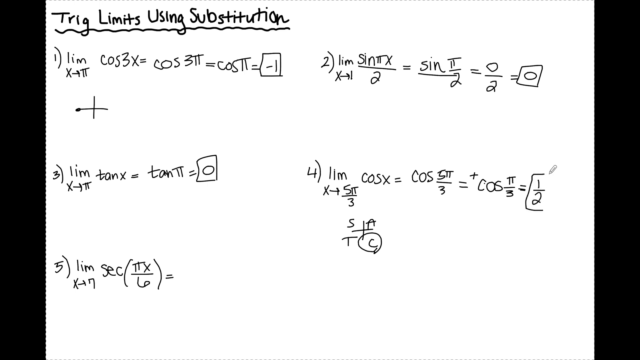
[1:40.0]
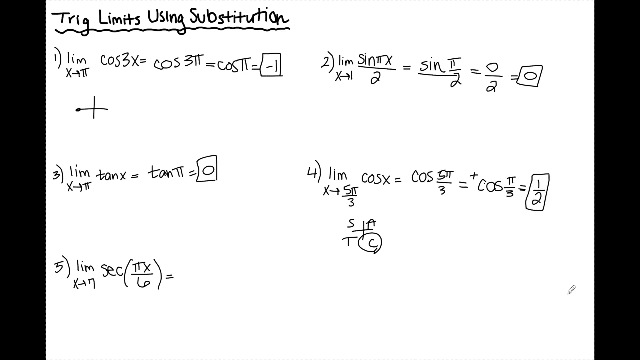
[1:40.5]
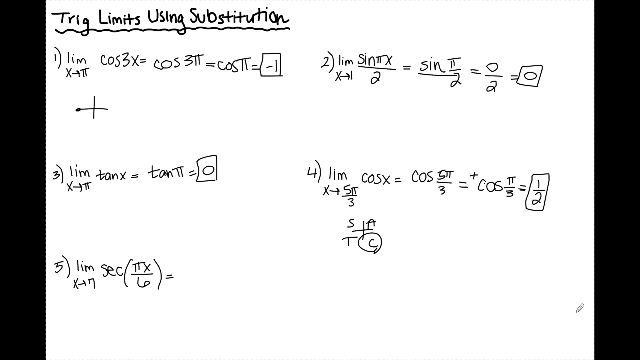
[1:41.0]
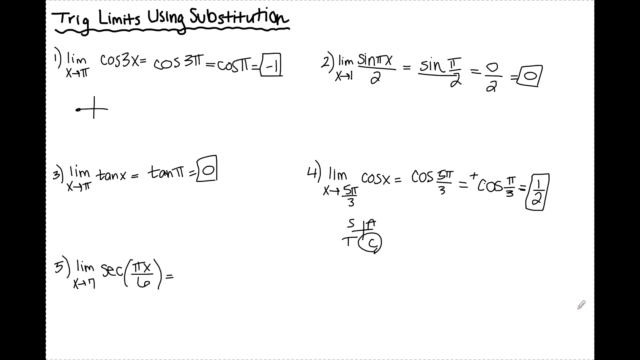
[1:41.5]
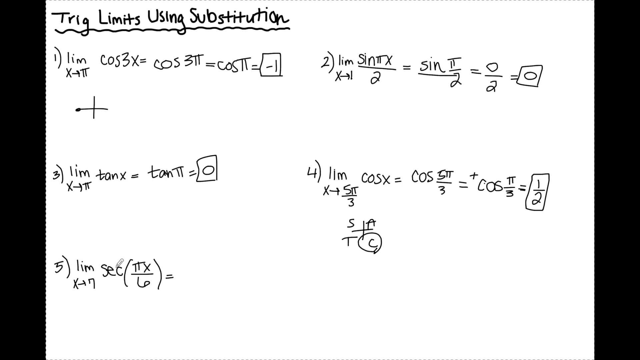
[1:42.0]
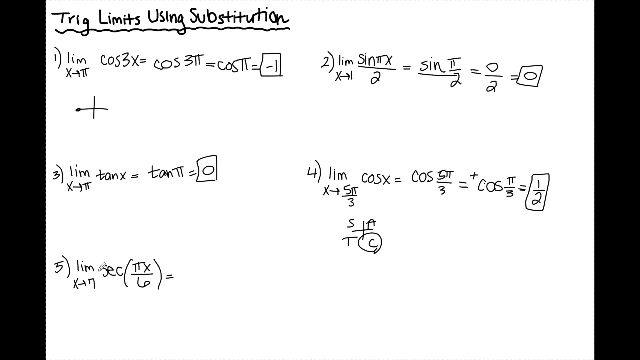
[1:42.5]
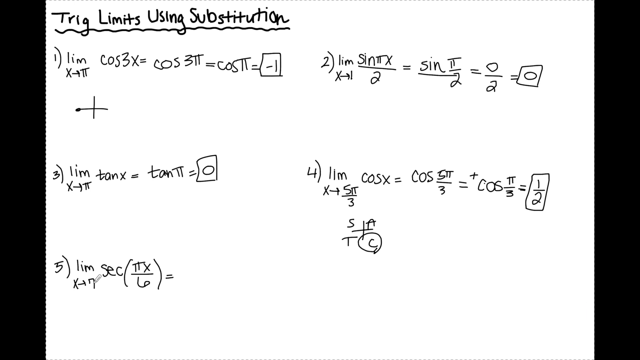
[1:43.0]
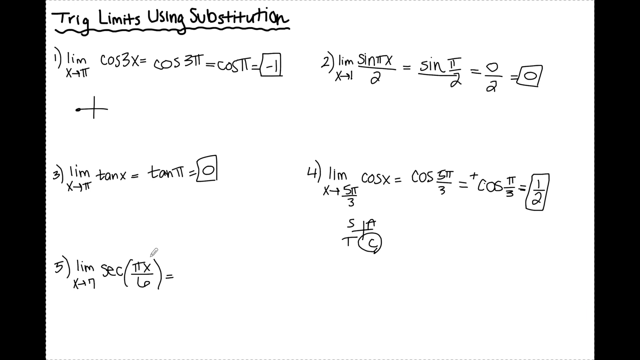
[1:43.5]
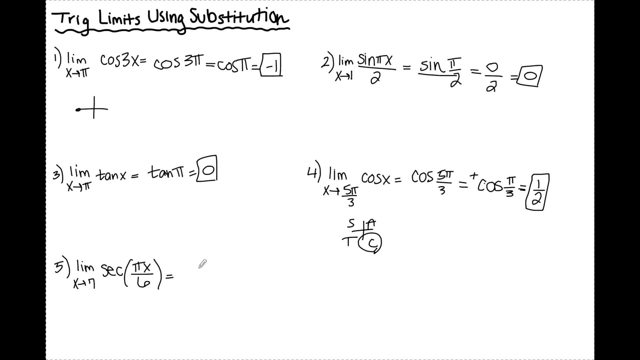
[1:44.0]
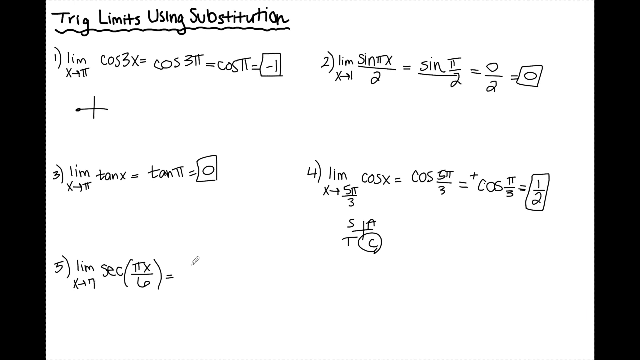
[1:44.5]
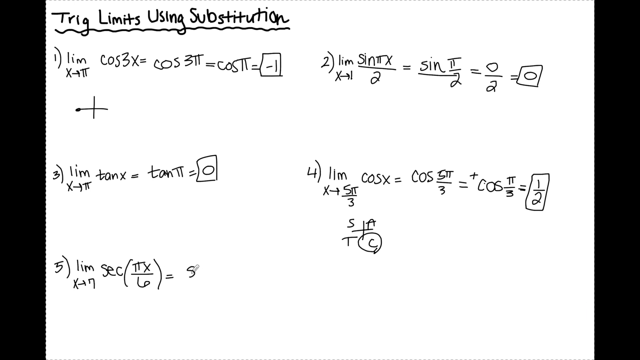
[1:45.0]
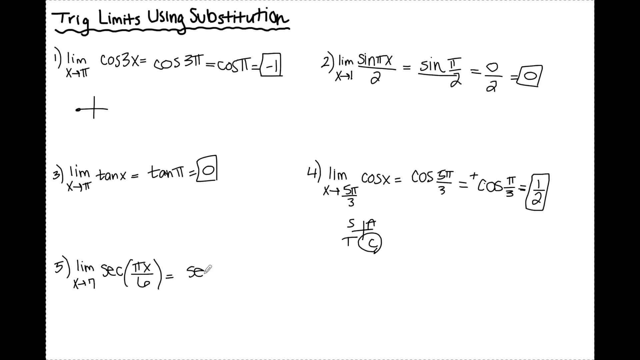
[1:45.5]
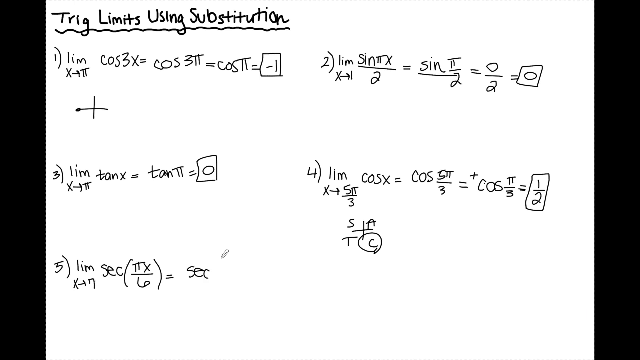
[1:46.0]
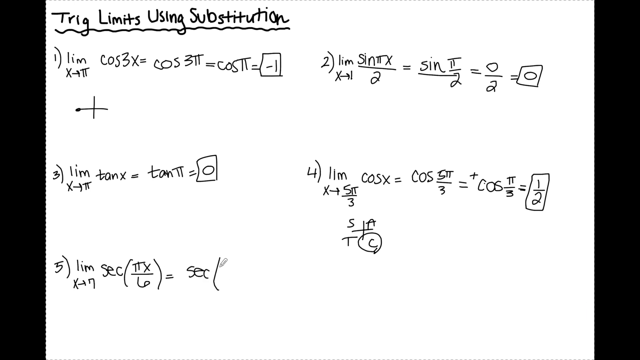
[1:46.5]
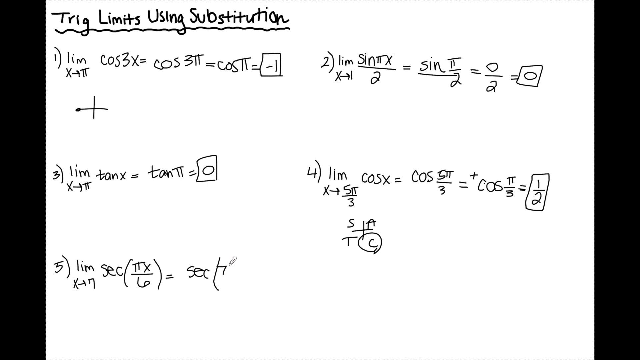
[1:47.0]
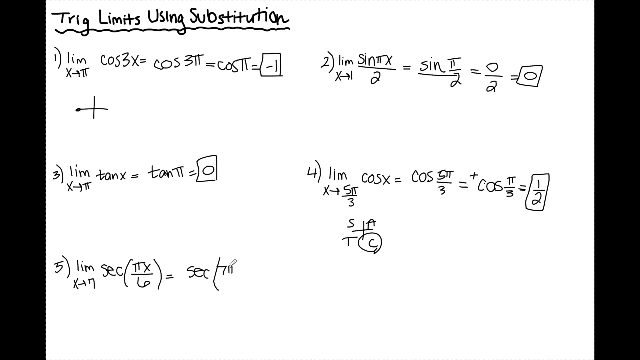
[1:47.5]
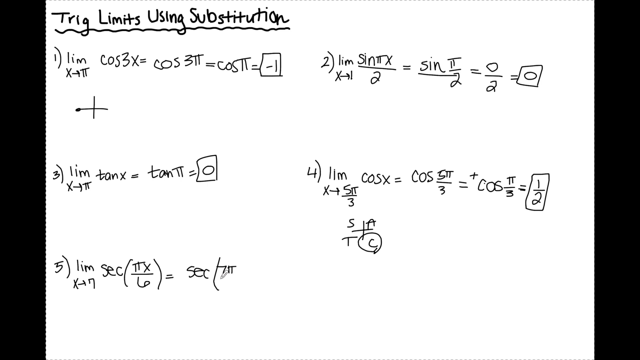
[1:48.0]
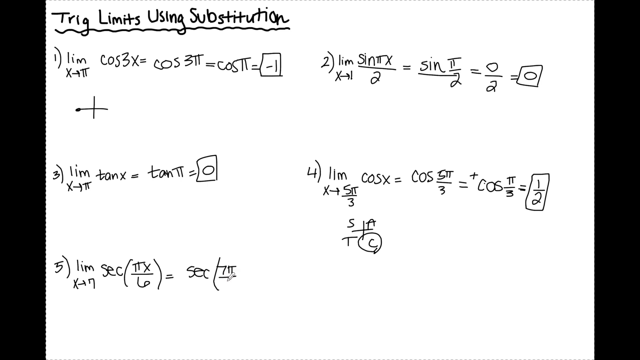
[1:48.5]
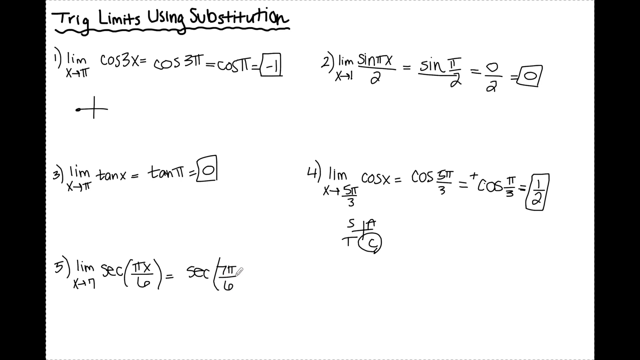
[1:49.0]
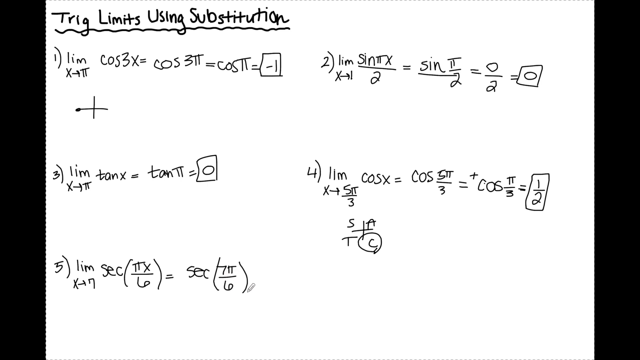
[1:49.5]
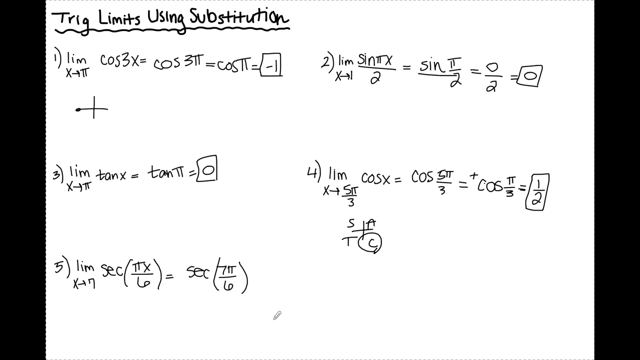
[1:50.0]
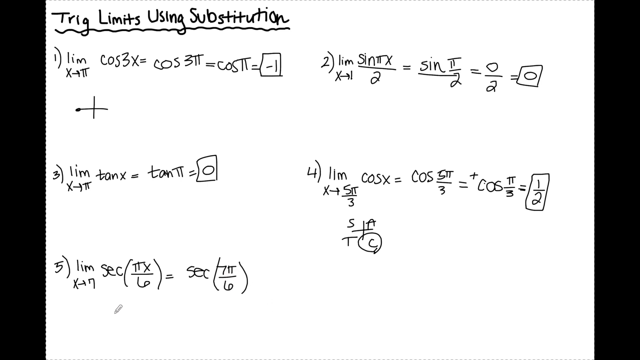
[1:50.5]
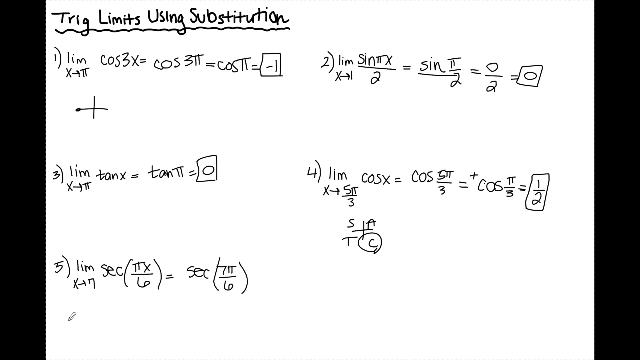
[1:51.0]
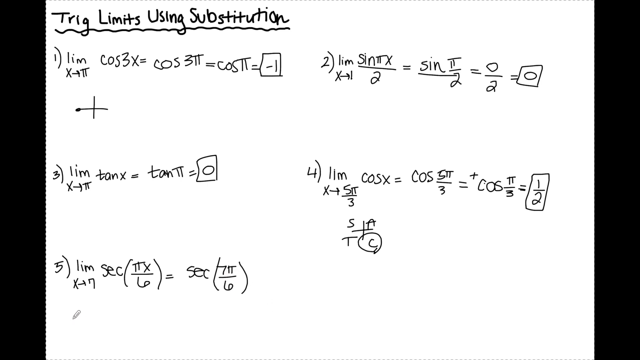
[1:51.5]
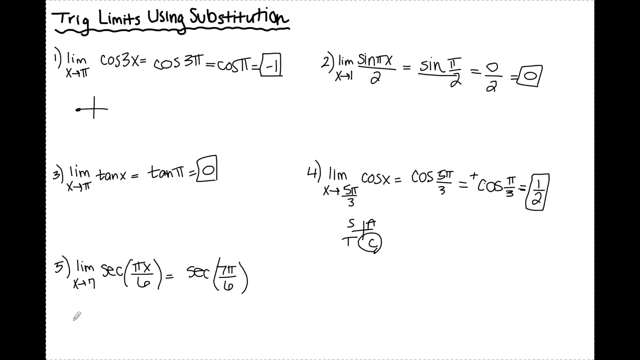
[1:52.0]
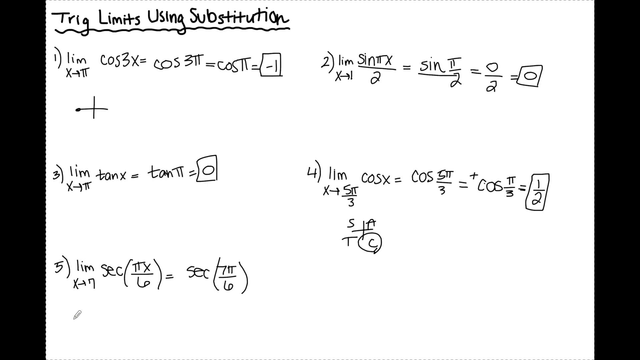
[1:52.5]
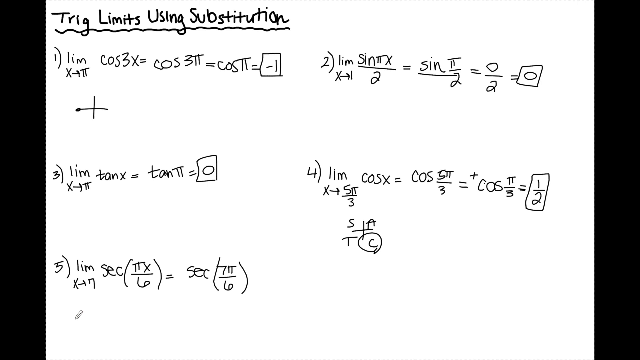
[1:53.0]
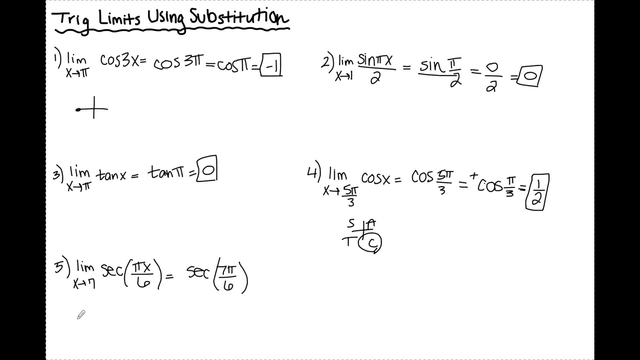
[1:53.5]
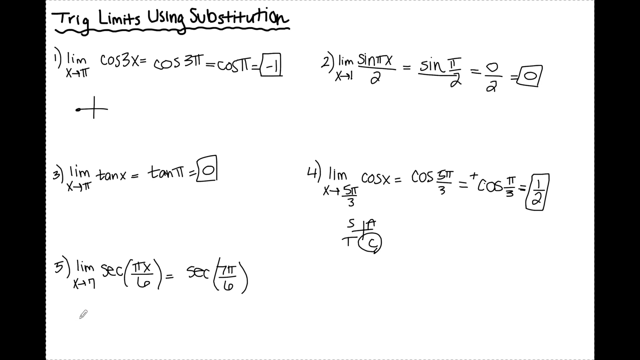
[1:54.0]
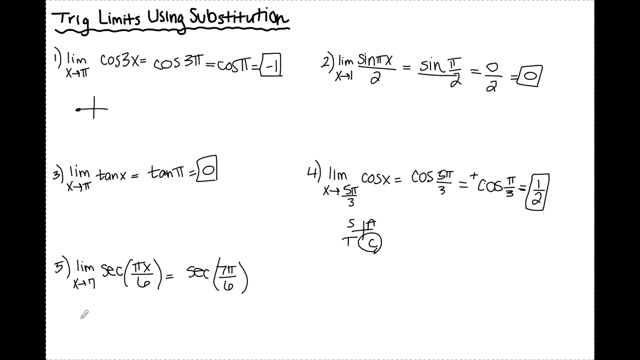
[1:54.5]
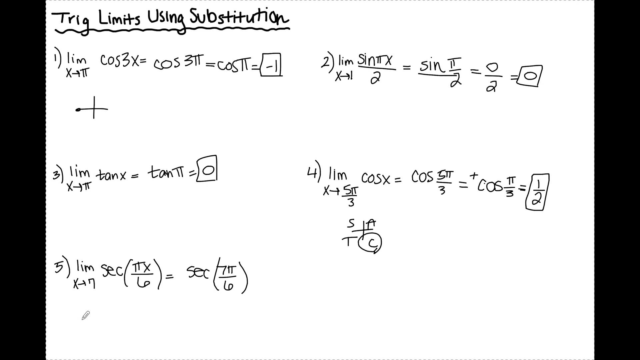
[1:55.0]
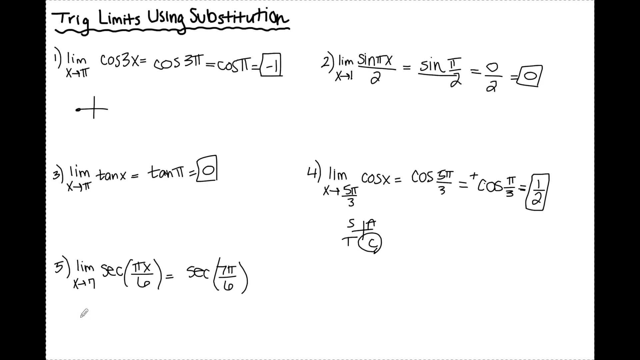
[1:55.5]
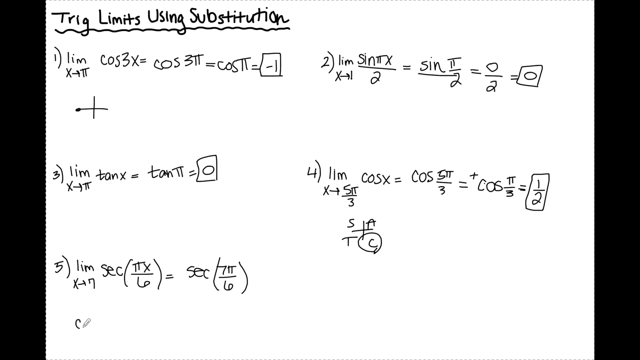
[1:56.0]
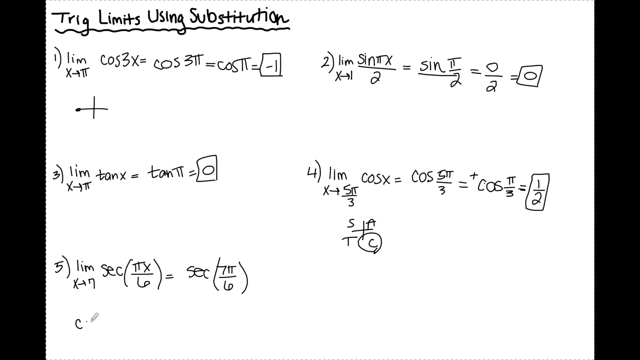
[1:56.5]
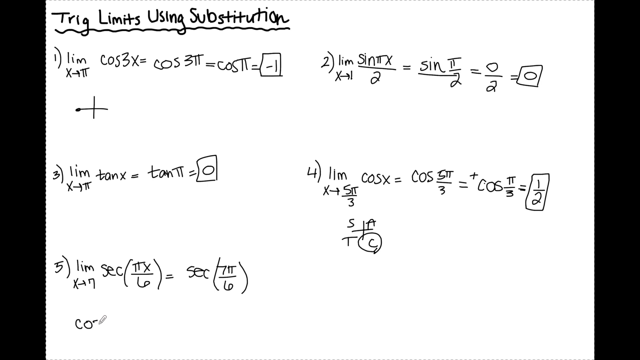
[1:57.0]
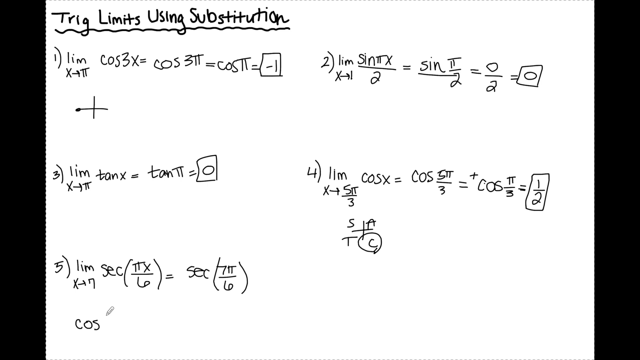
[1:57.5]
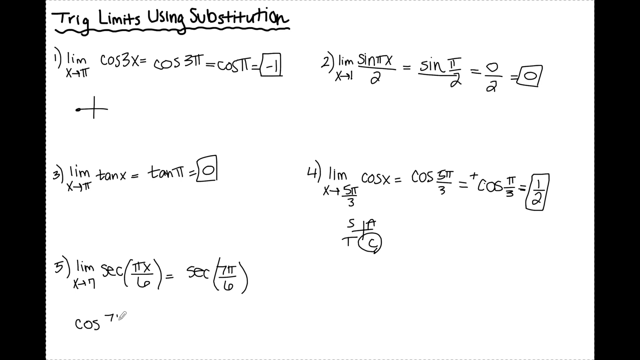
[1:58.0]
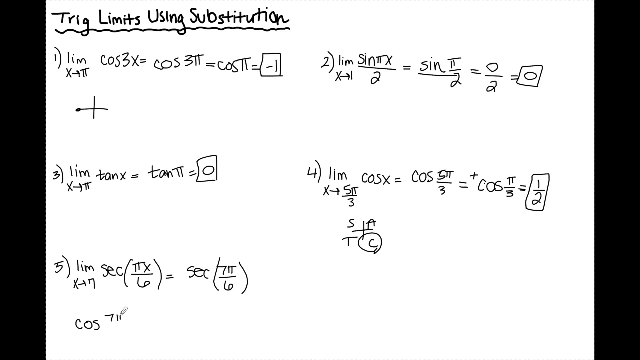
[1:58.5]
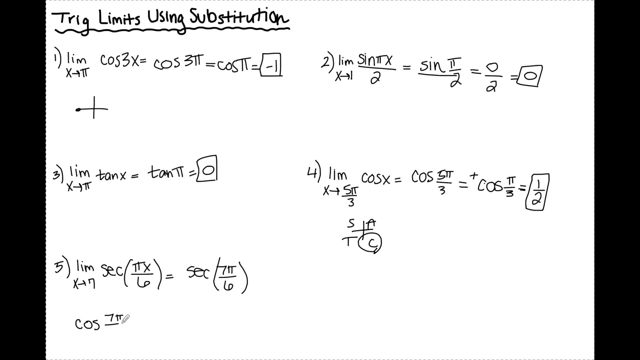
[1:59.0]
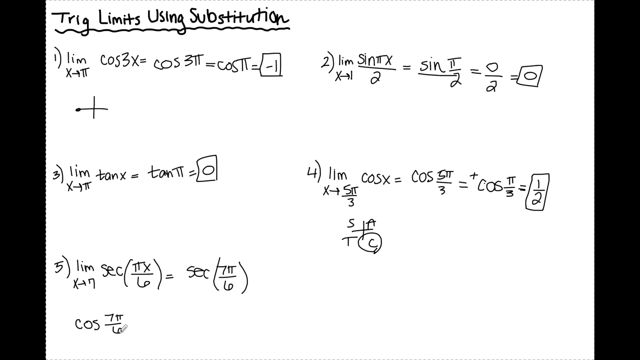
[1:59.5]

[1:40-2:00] The cursor finishes the box around 1 divided by 2 on question 4, so that, like the other equations, it now has its answer boxed after the simplified equations. The cursor moves from right to left to equation 5 and moves around the equation, quickly circles it, and moves to the end. After the equals sign it writes SEC with 7 pi over 6 in parentheses. It then moves down slightly underneath the equation, stays in the bottom left corner, and slowly writes C-O-S 7 pi divided by 6. Almost all of the equations now have answers after their simplified equations.